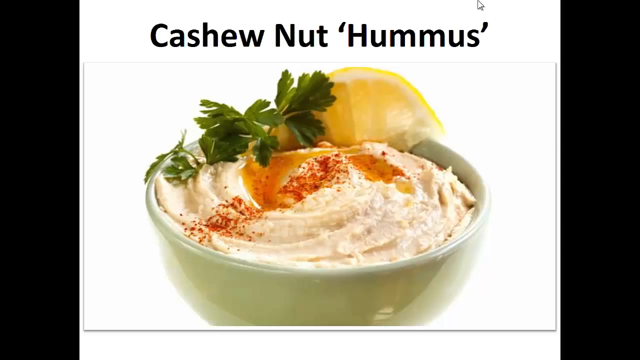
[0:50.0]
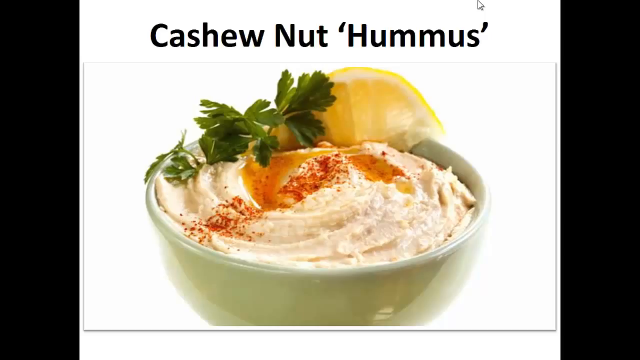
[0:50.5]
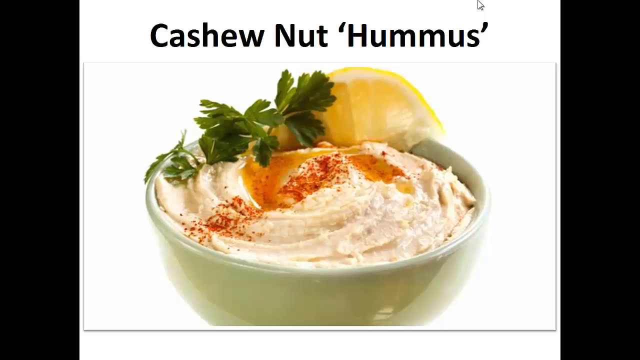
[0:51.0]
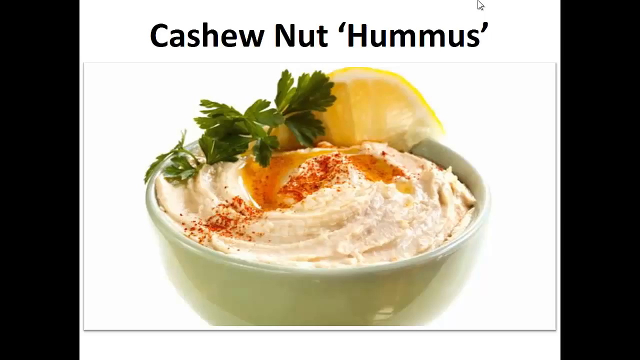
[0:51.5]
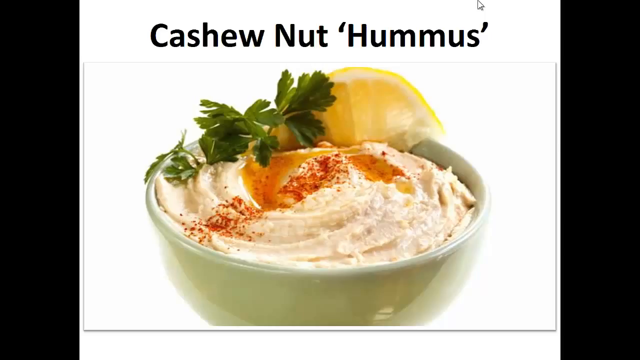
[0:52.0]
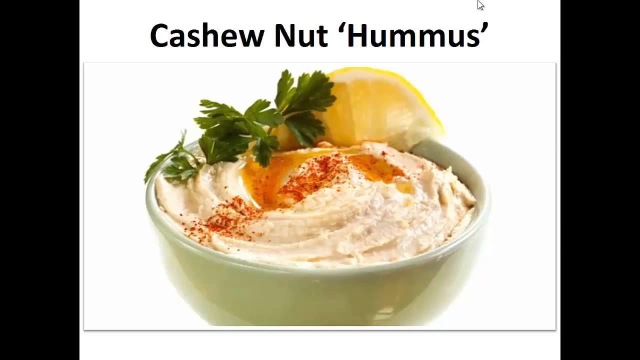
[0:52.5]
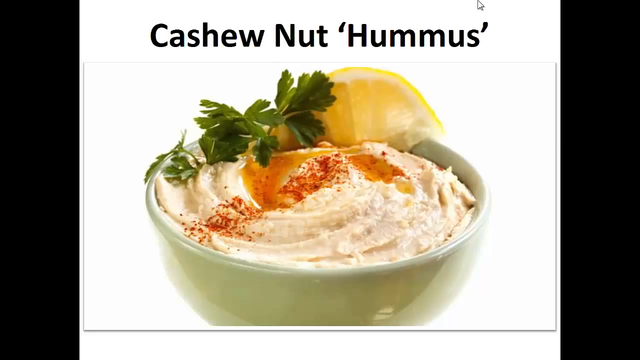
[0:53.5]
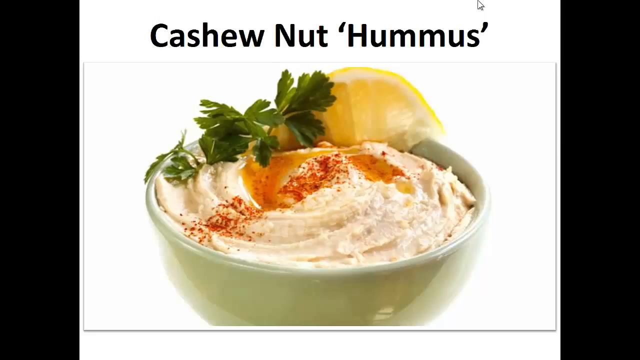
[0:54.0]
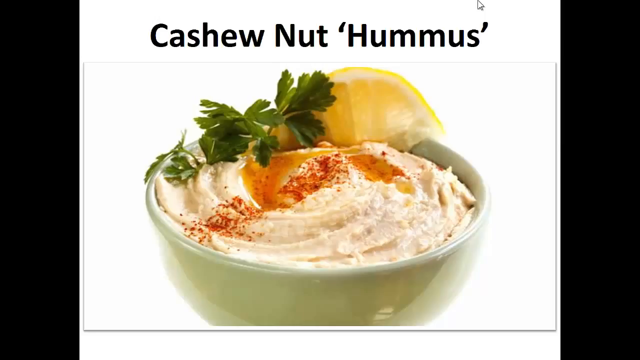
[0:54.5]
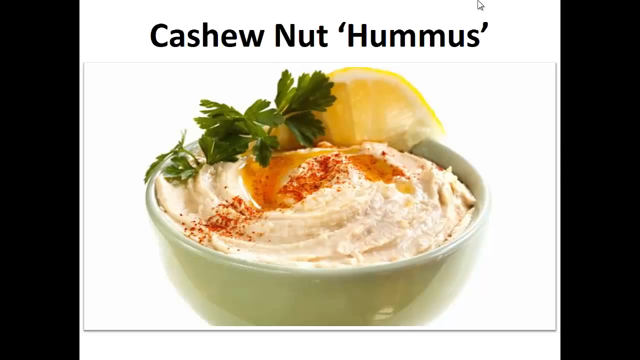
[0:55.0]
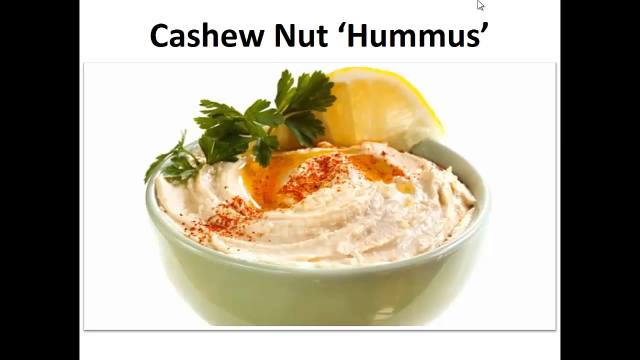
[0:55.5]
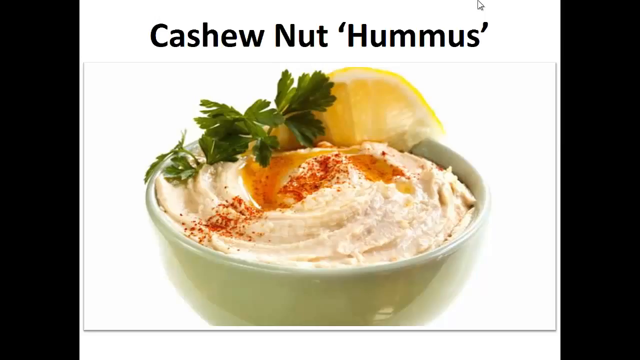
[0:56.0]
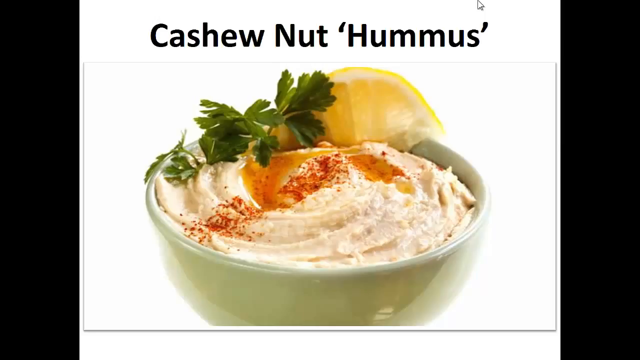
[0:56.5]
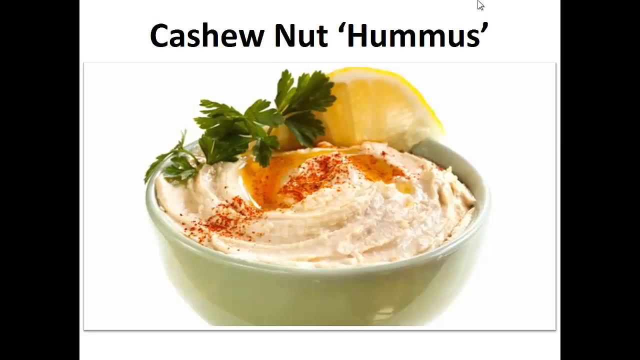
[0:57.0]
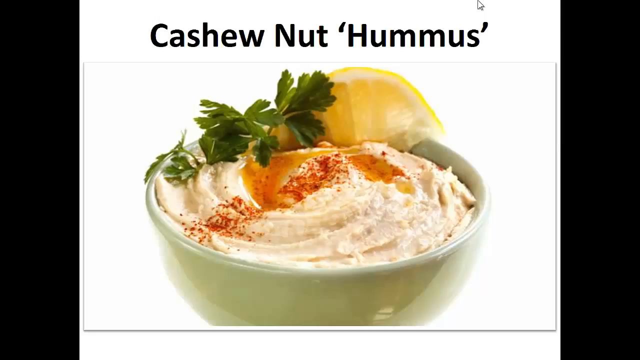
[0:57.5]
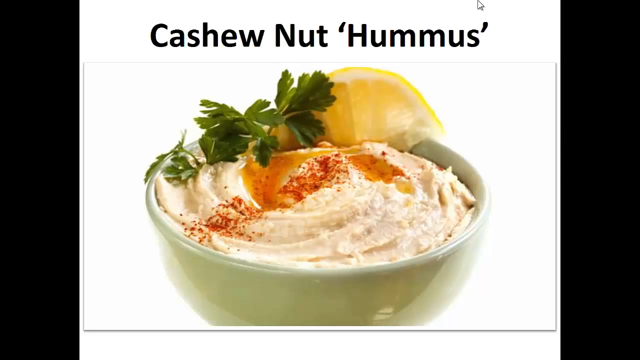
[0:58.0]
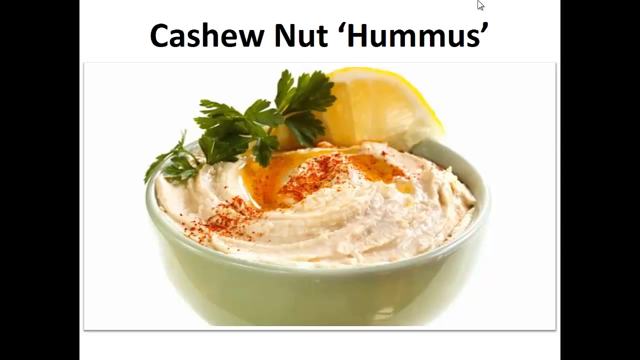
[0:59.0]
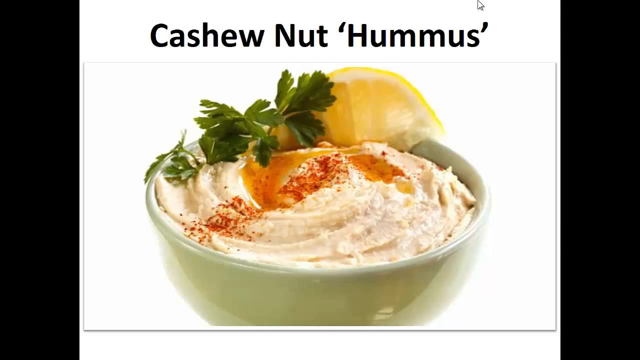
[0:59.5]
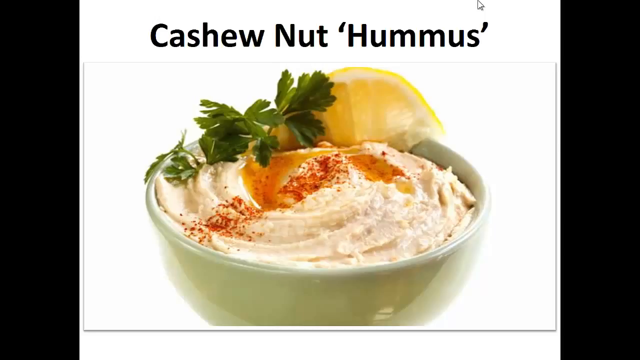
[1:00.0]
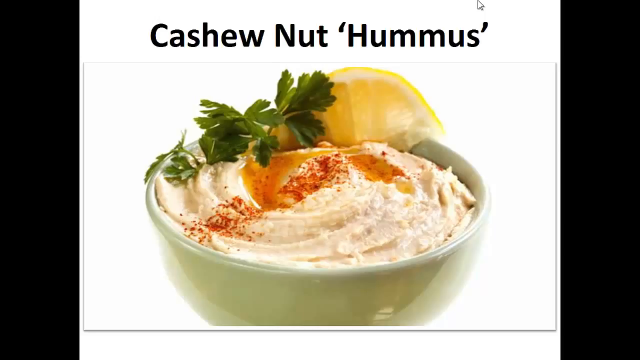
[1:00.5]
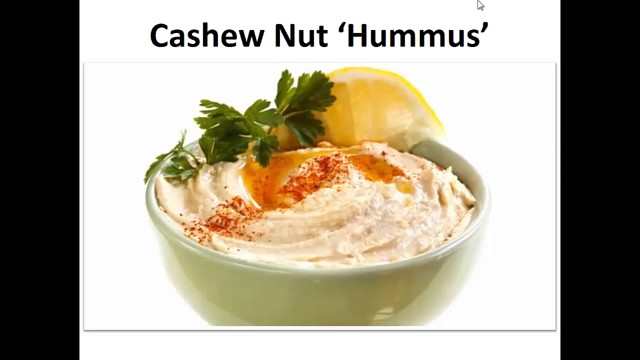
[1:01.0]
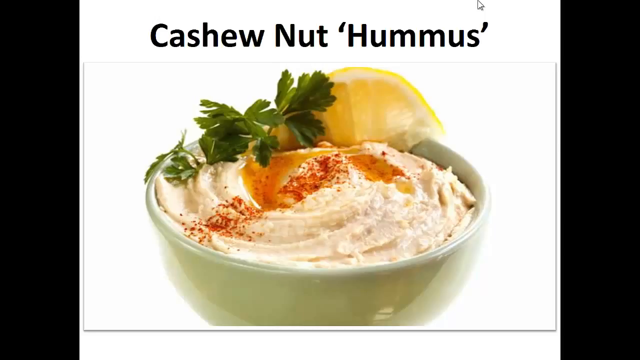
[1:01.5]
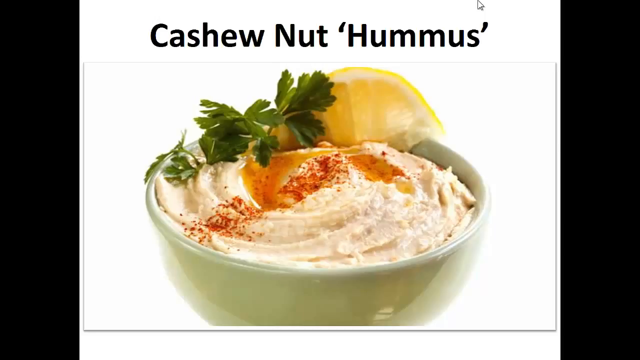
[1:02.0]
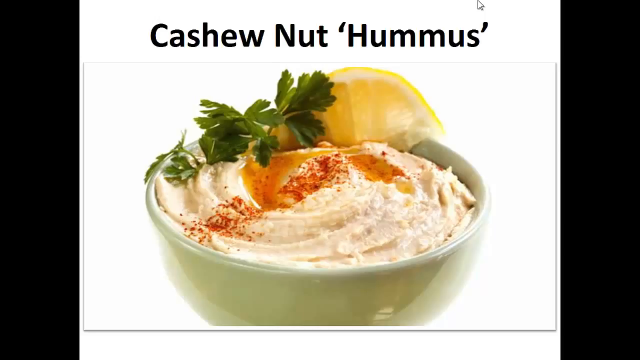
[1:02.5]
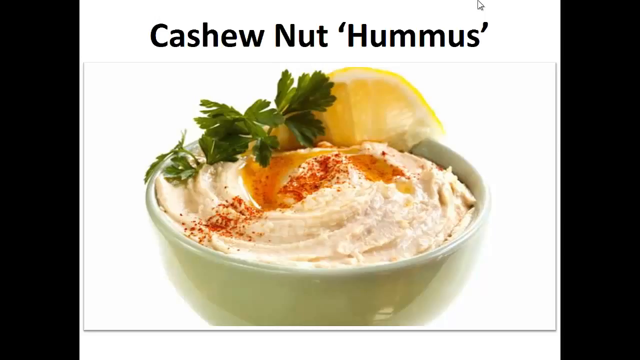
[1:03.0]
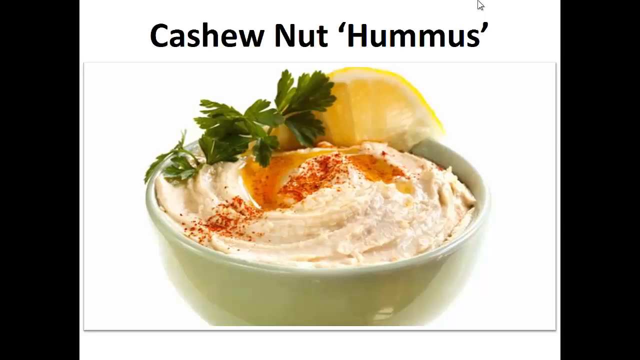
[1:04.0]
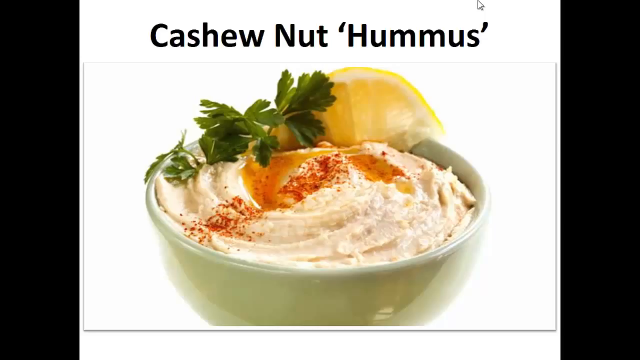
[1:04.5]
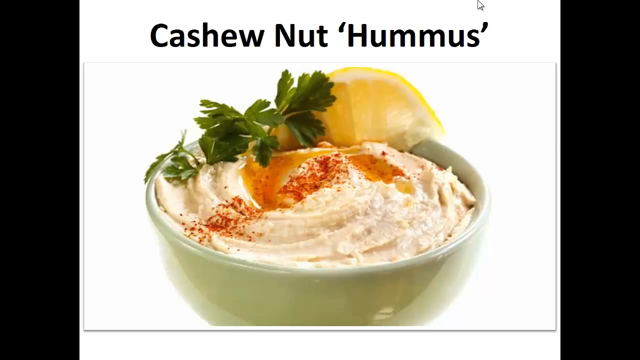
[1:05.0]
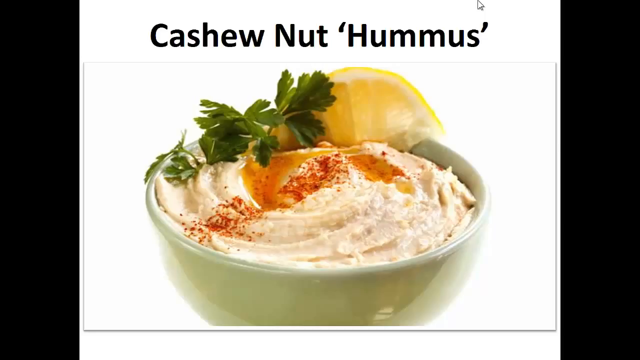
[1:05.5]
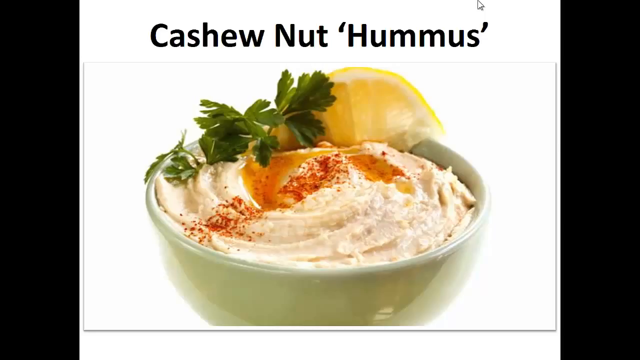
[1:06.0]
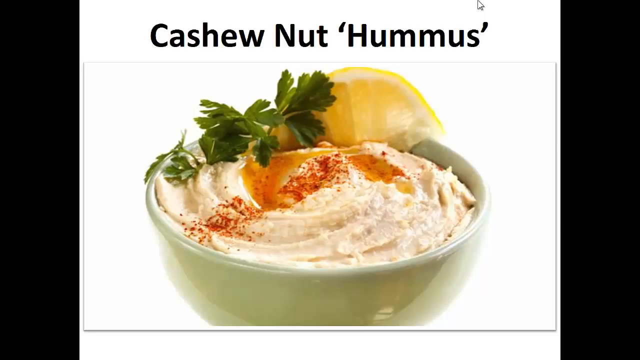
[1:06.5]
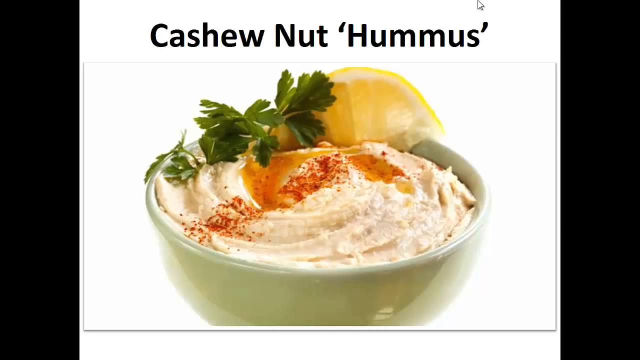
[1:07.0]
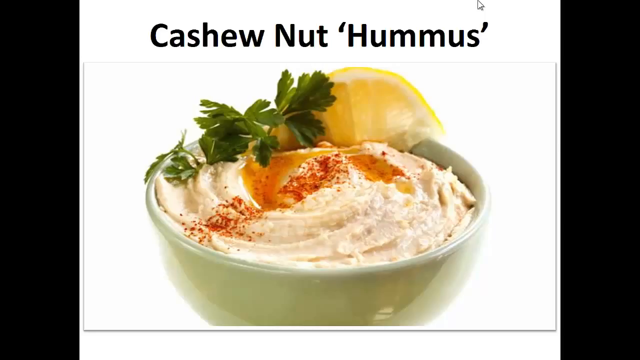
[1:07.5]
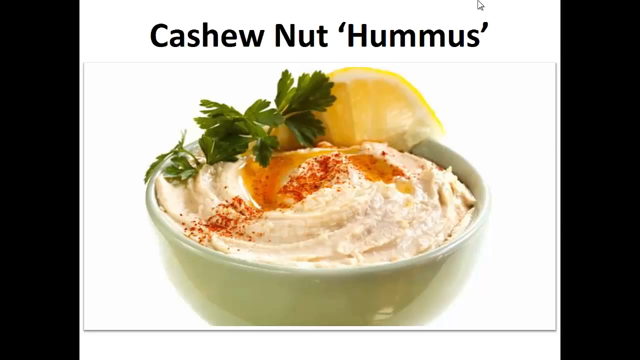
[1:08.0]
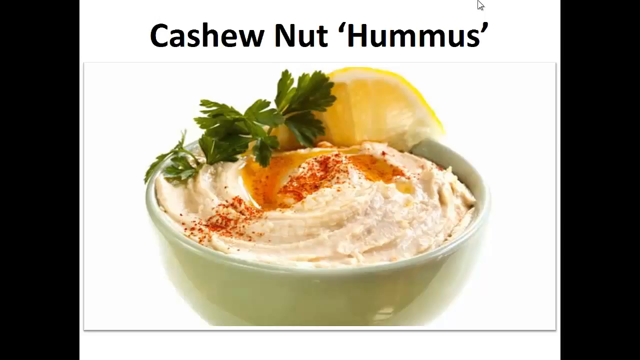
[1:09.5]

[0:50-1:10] The same still photo of the cashew nut hummus stays on screen. A yogurt-y substance fills the entire bowl up to the top, with some orange flavoring and seasoning on top. Green leaves are toward the back edge of the bowl, and next to them a yellow half lemon rests on the side of the bowl. The bowl is plastic and seems to be glossy and reflective. The image has a white background and white borders, and there are black borders on each side of the video.